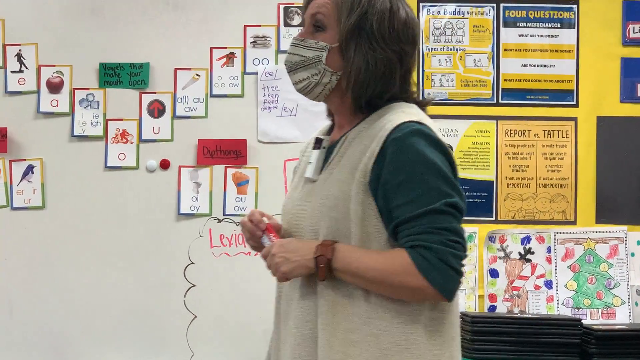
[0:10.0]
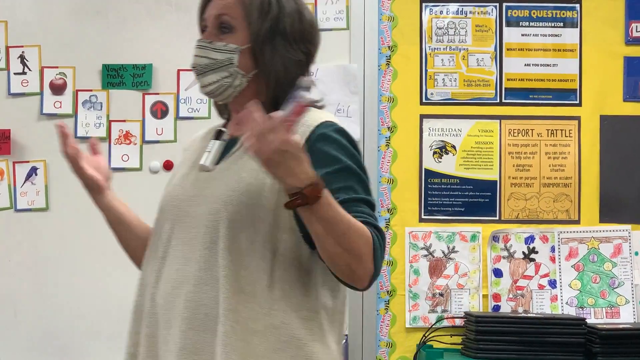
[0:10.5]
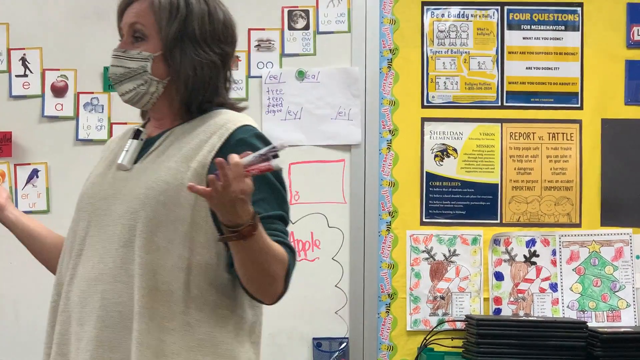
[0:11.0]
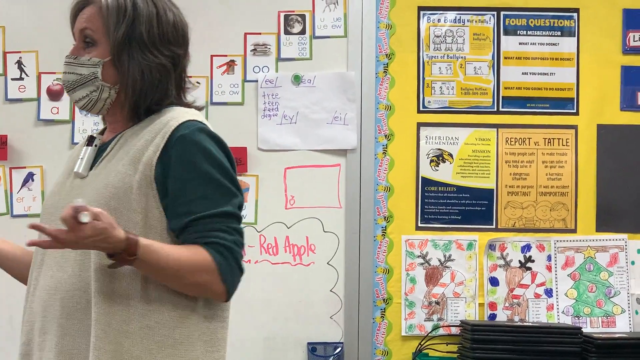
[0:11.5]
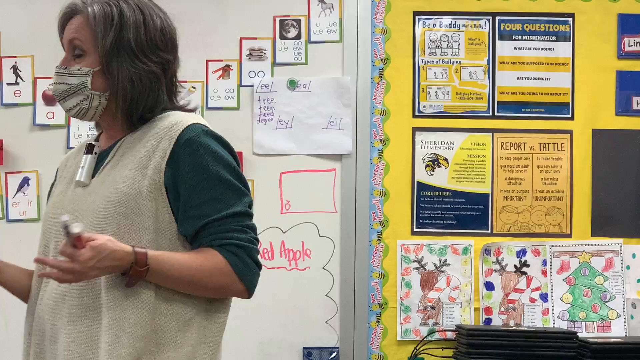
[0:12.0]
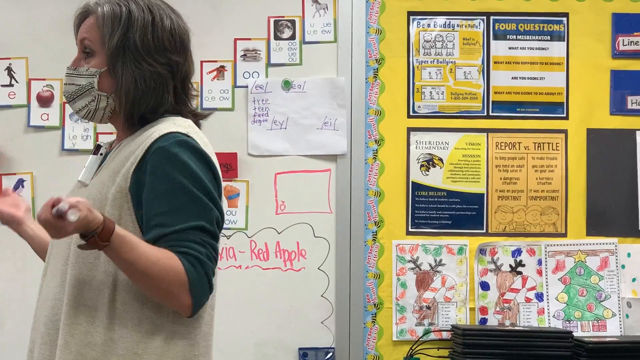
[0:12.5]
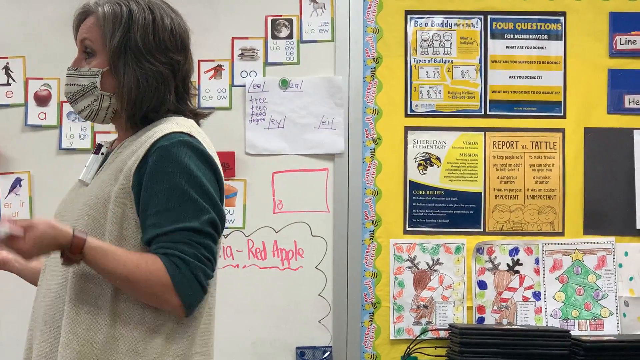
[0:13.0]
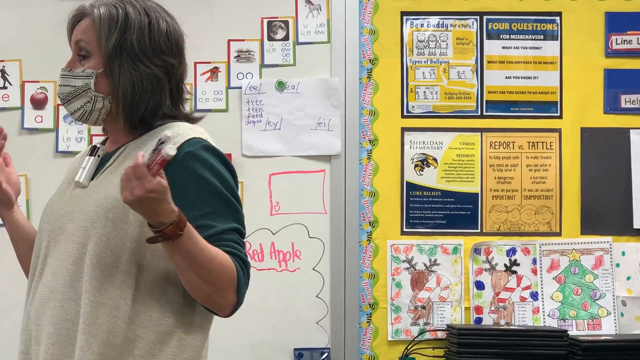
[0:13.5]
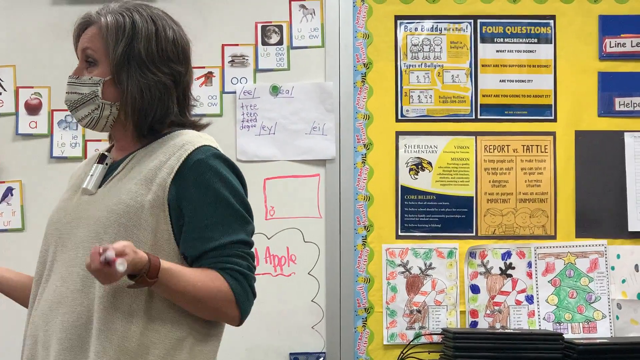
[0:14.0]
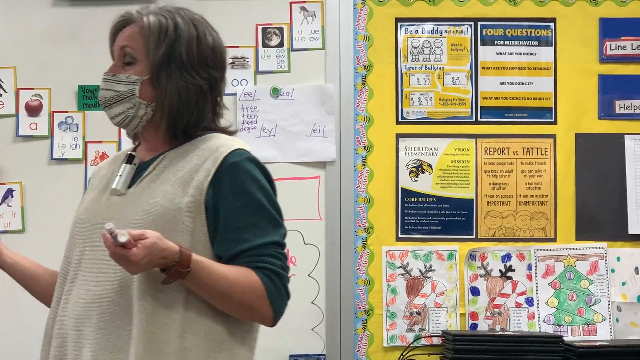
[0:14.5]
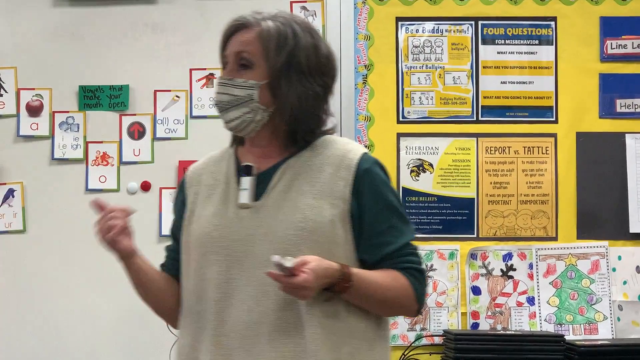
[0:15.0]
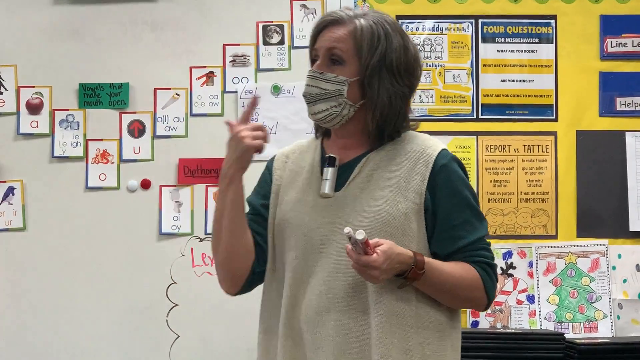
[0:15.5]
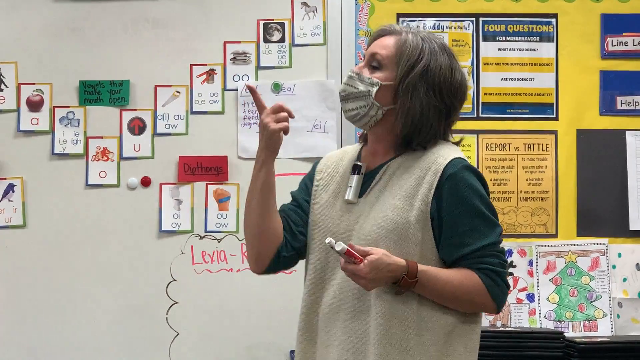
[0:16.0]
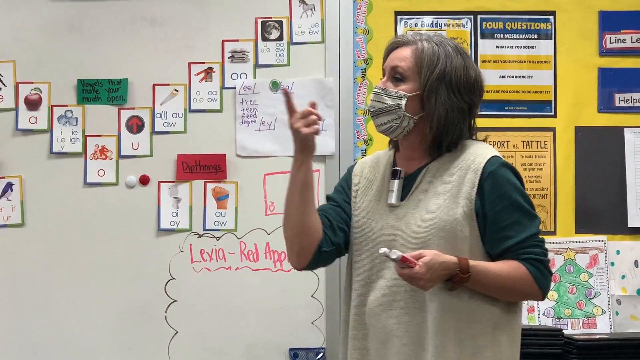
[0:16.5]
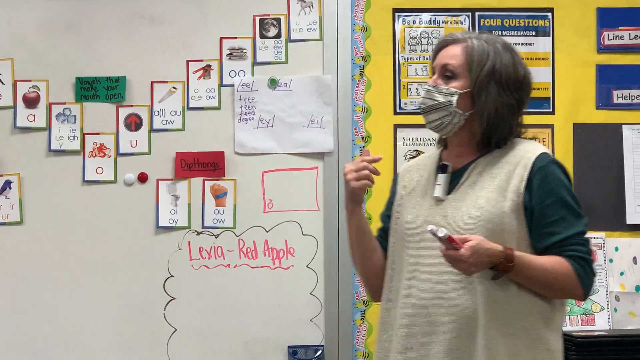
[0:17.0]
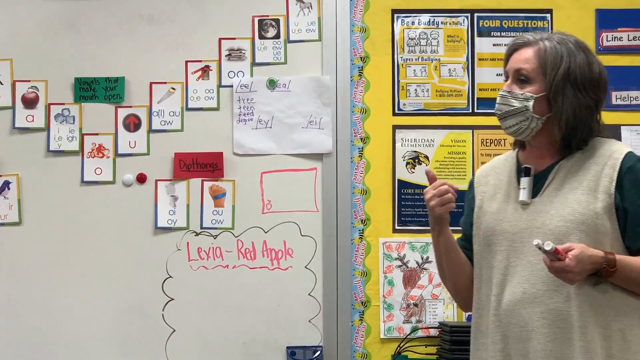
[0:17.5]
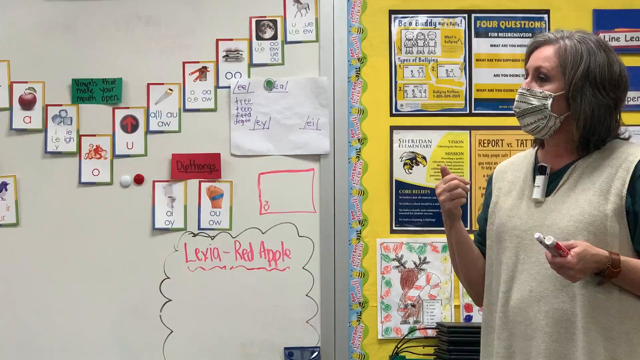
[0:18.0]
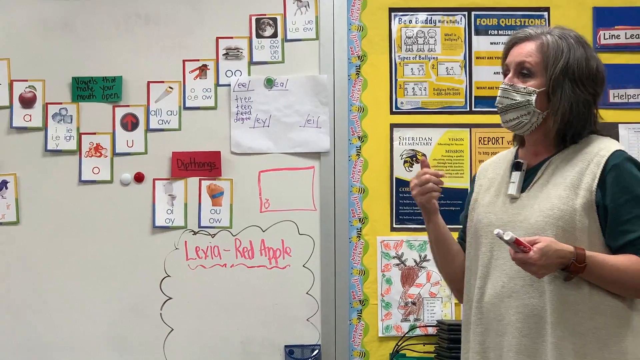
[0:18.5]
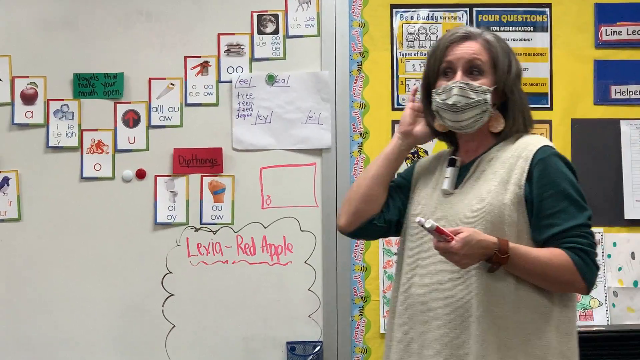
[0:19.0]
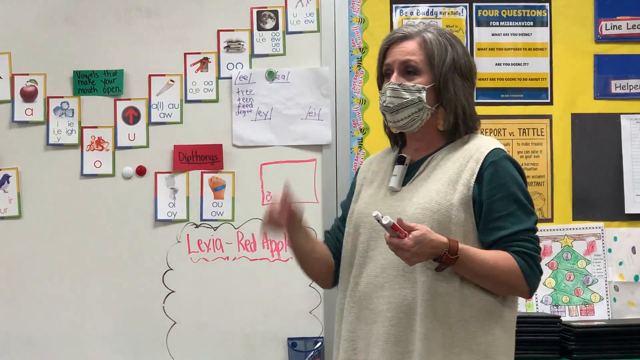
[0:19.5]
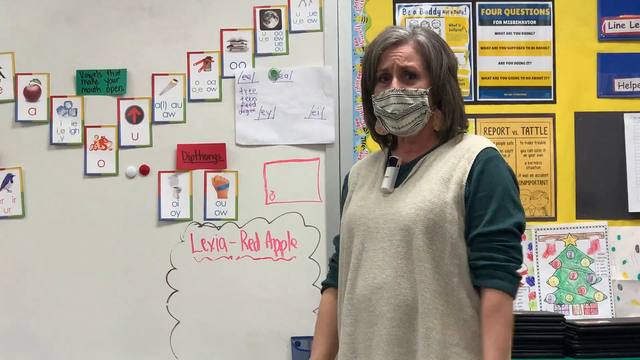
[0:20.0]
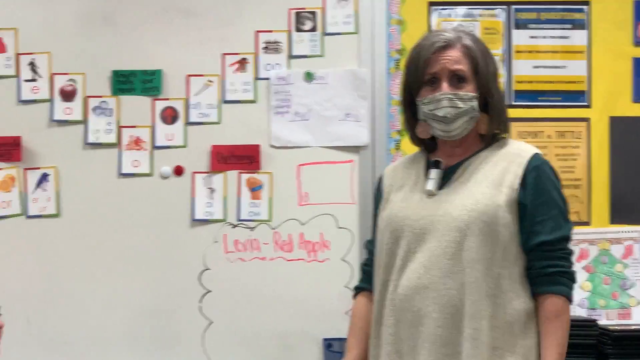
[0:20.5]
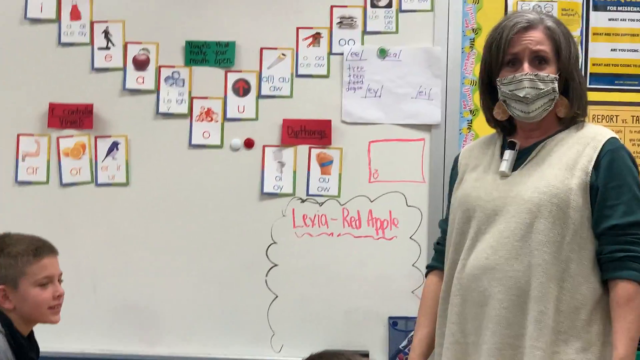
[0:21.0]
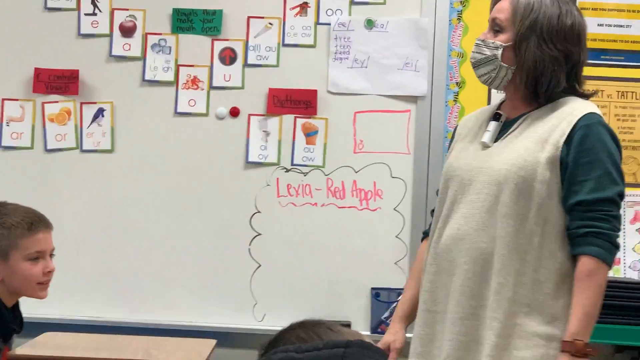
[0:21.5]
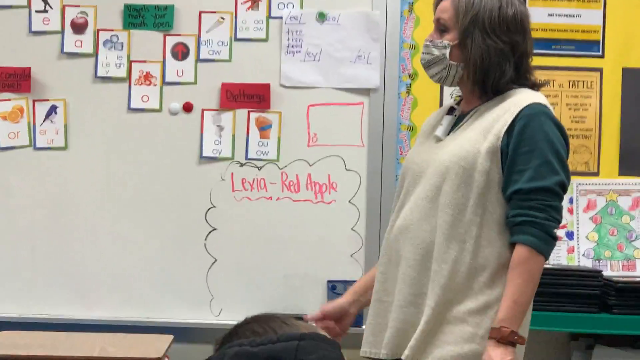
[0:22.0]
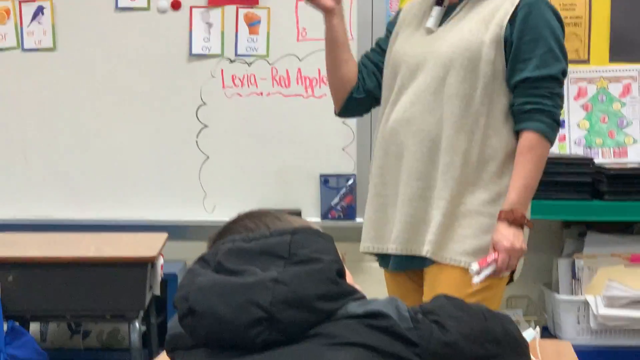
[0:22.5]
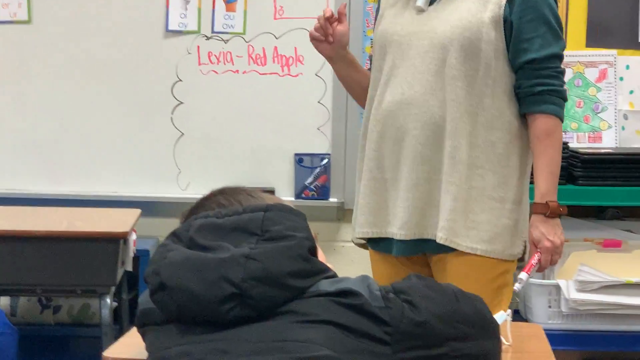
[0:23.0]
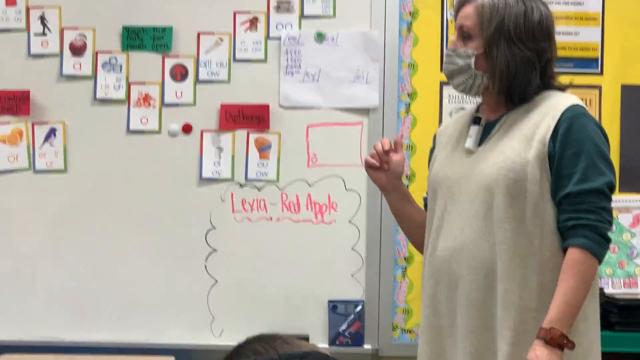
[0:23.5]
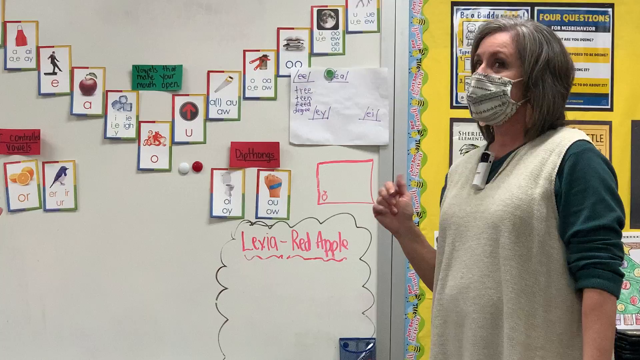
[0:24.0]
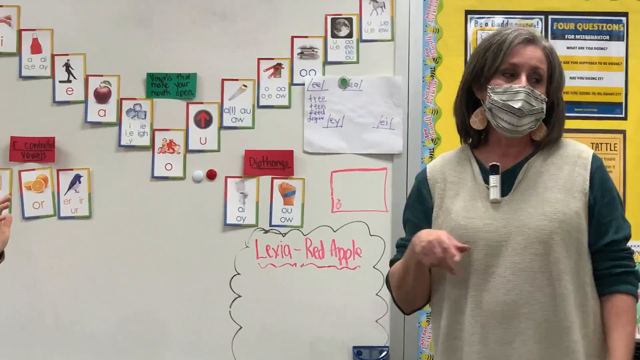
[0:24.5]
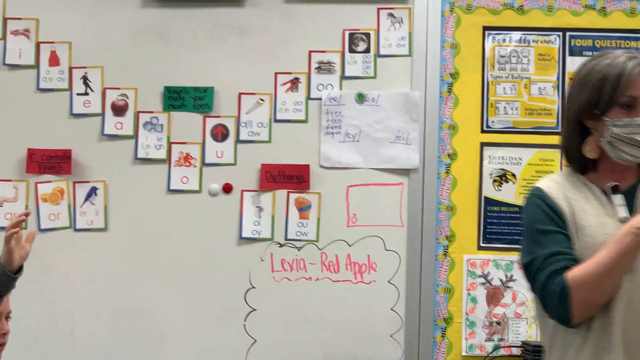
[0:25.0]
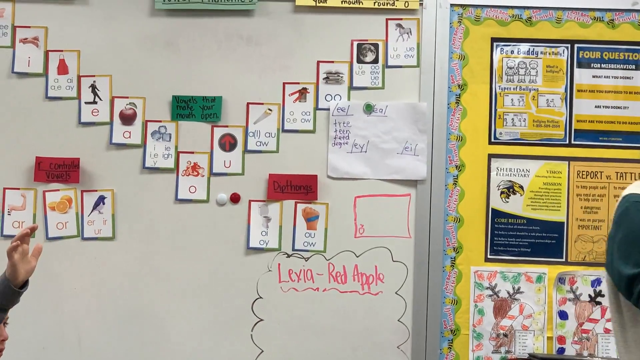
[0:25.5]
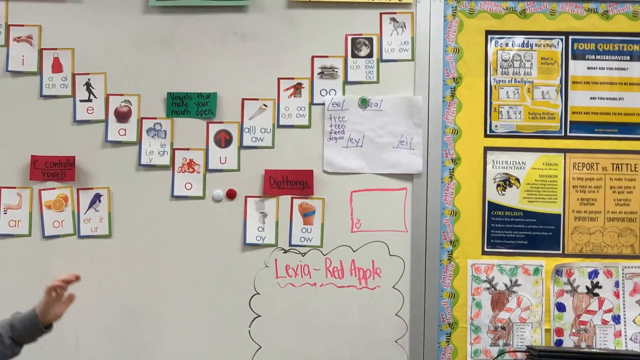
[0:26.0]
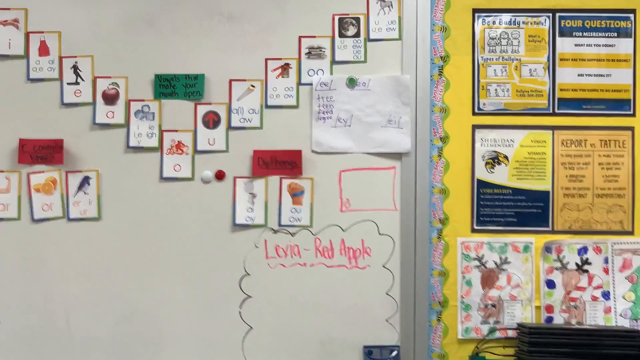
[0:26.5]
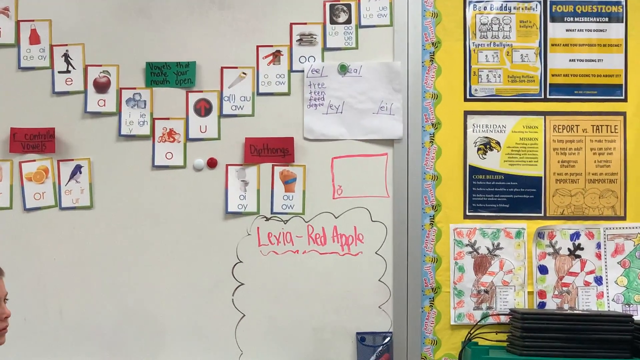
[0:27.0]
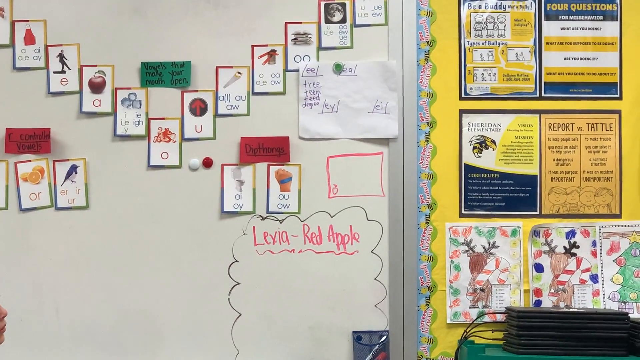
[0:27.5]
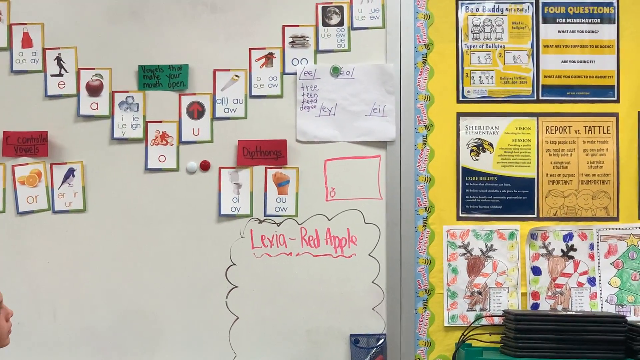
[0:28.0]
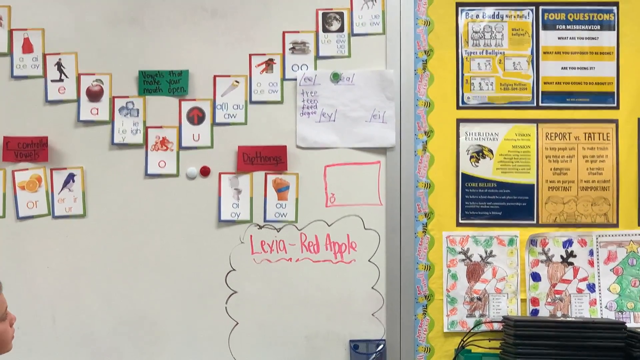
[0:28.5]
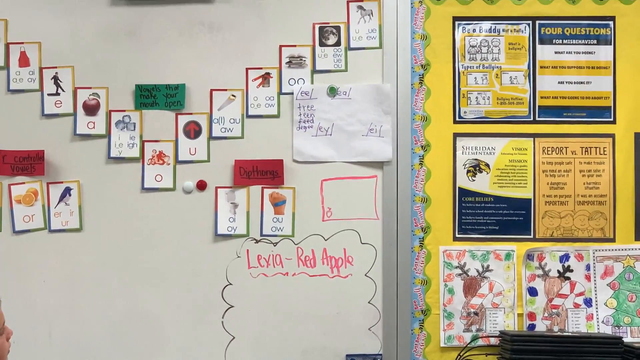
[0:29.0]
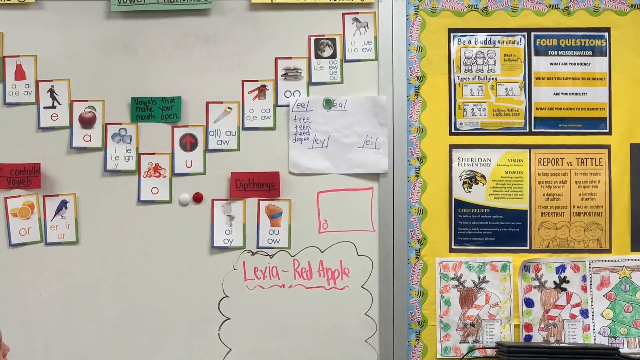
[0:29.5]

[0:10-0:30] A female teacher talks to a class and asks her pupils questions. She wears an off-white jumper with a green t-shirt underneath, a face mask, a brown watch and yellow trousers, and has a microphone on her clothes. Her hair is black with a bit of grey. She holds two different pens in her hands. Behind her is a whiteboard with cards showing different sounds of words, along with written text, including the words "Levia Red Apple", suggesting this could be a lesson teaching a language. Several pupils sit listening to the teacher. On the right of the image is a poster board with various posters and drawings on it.